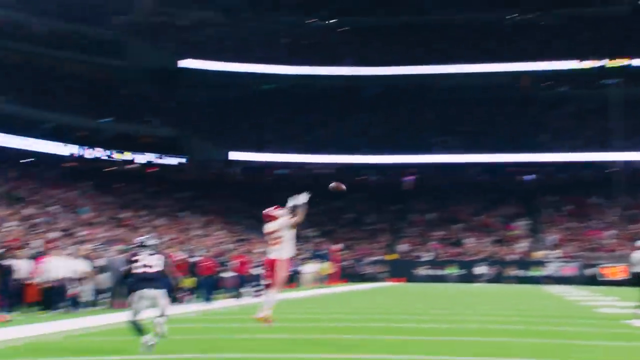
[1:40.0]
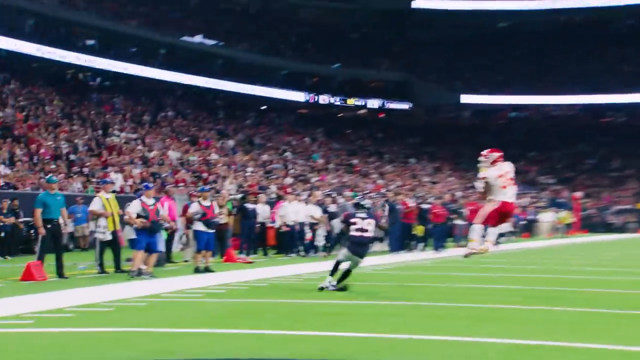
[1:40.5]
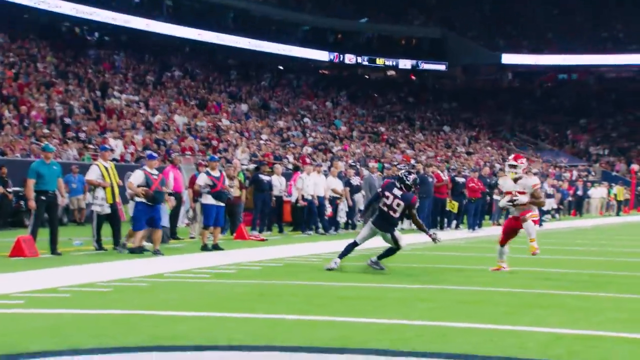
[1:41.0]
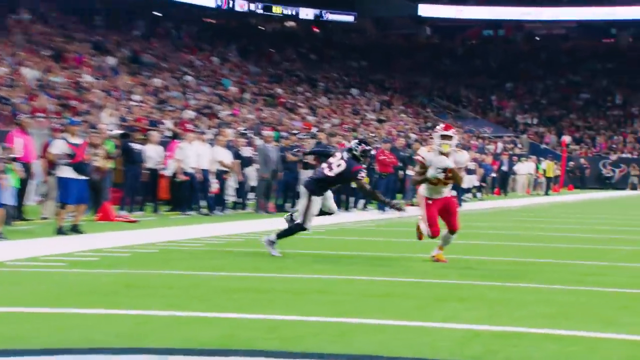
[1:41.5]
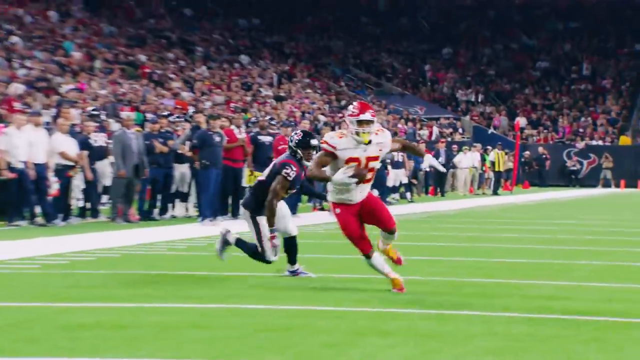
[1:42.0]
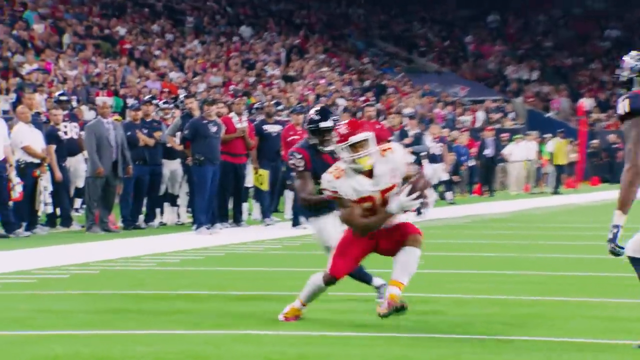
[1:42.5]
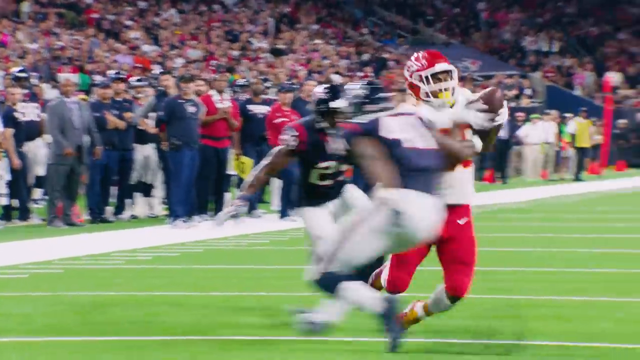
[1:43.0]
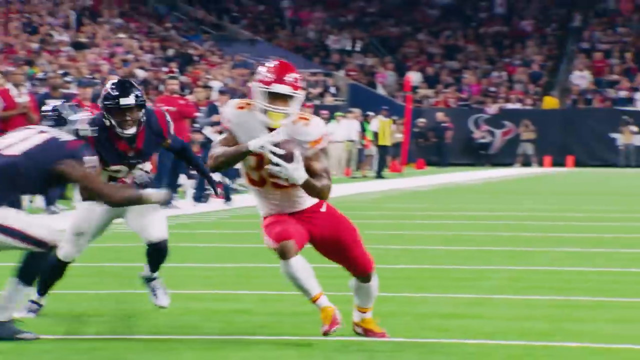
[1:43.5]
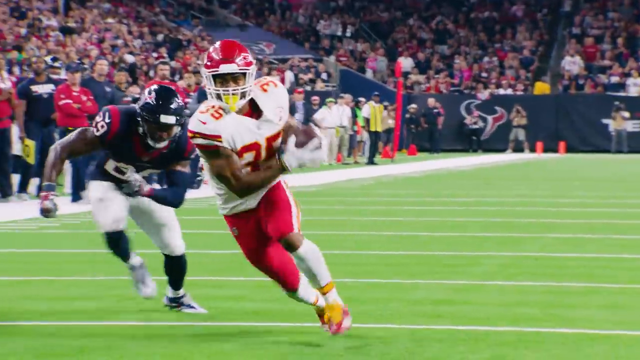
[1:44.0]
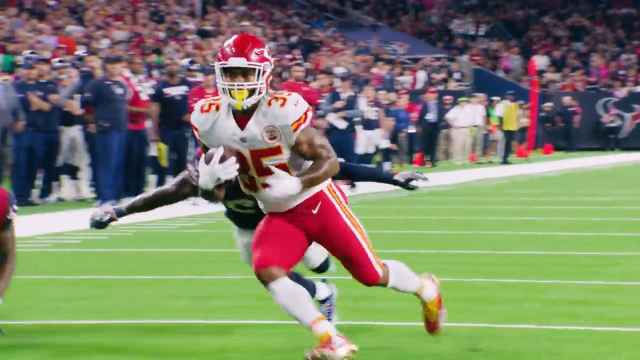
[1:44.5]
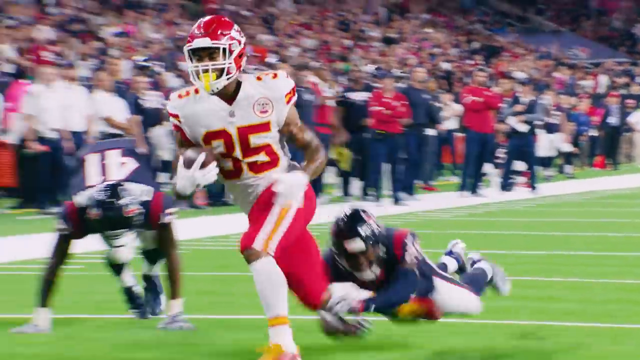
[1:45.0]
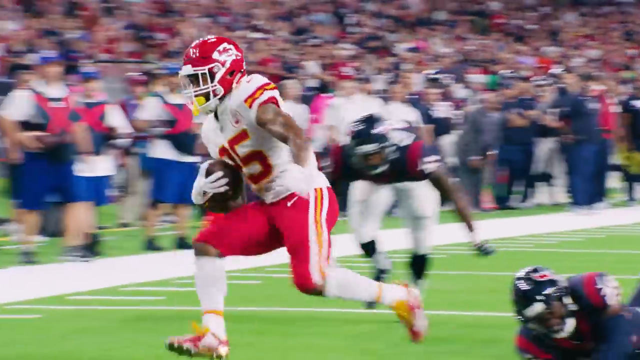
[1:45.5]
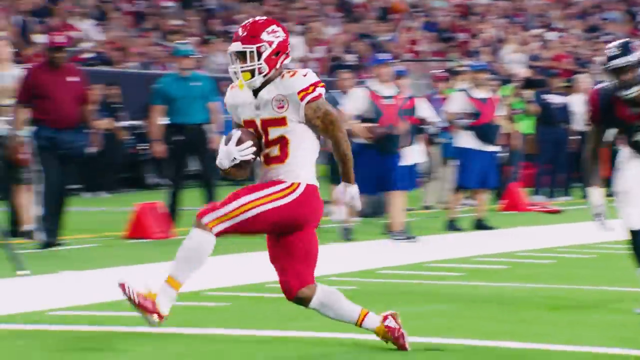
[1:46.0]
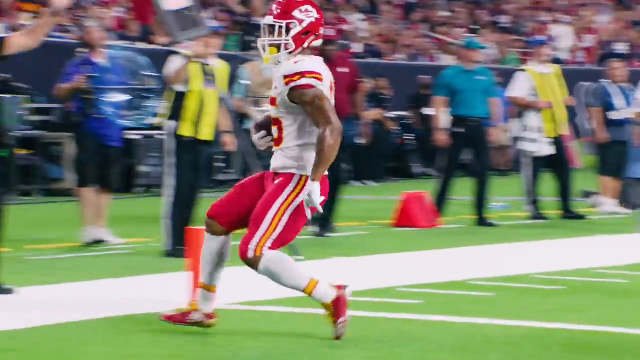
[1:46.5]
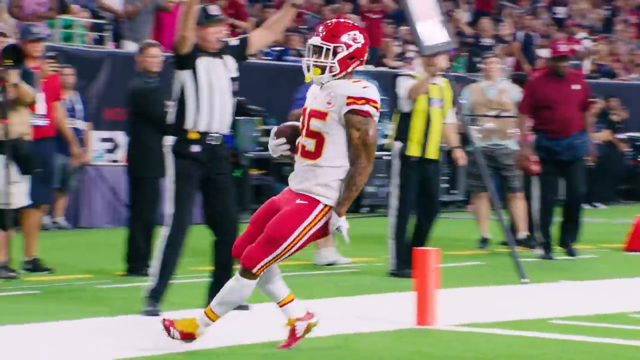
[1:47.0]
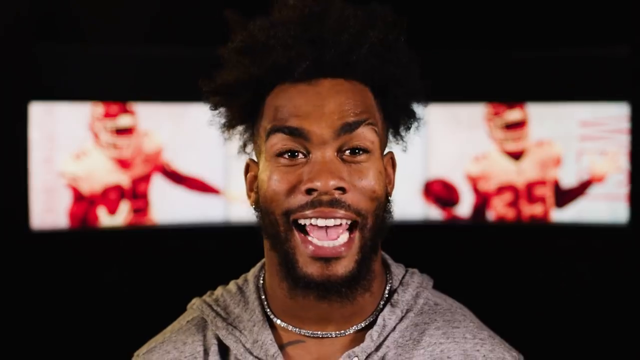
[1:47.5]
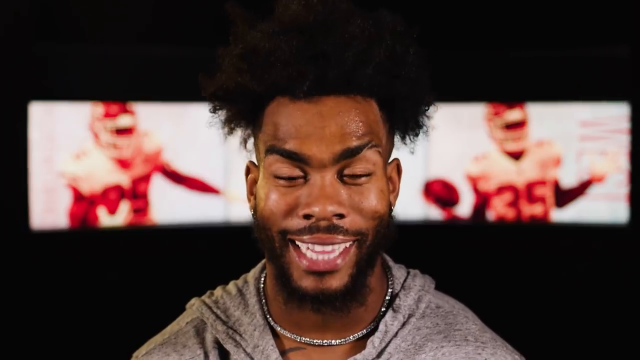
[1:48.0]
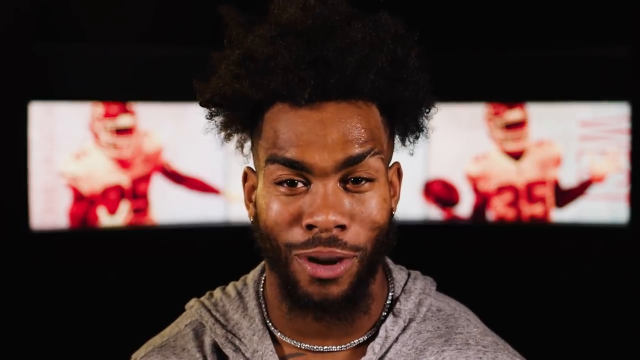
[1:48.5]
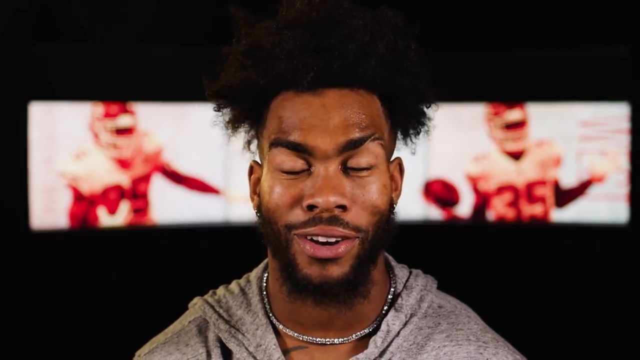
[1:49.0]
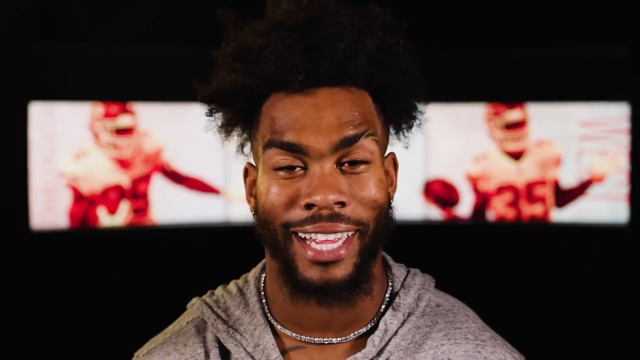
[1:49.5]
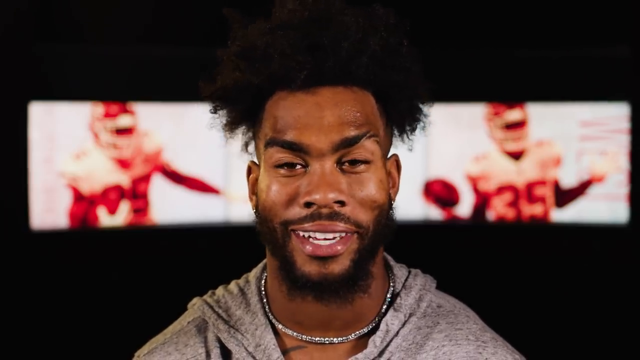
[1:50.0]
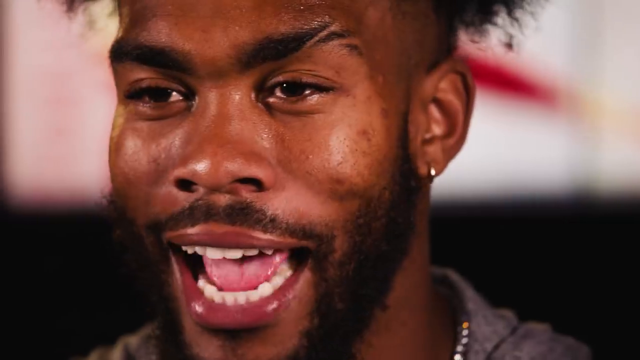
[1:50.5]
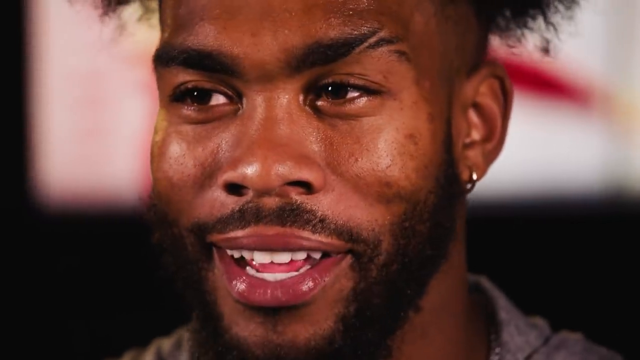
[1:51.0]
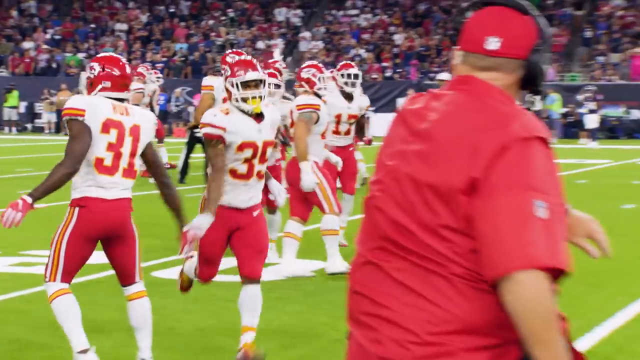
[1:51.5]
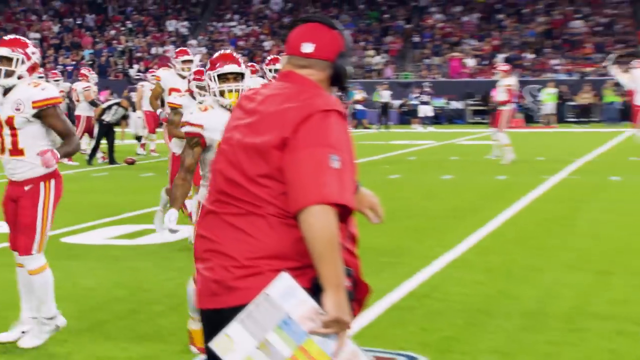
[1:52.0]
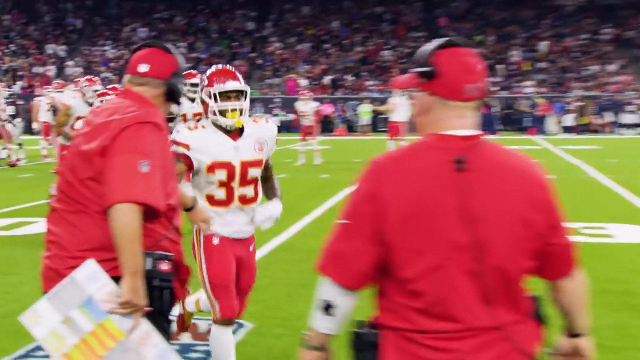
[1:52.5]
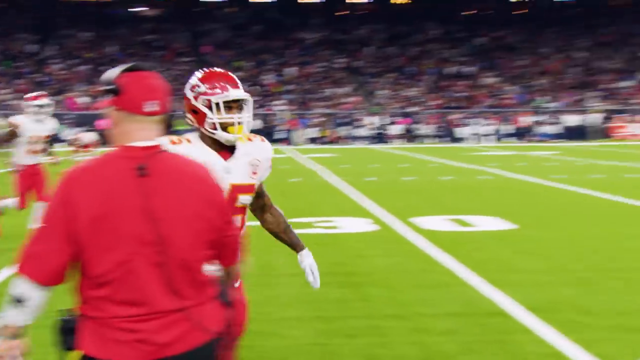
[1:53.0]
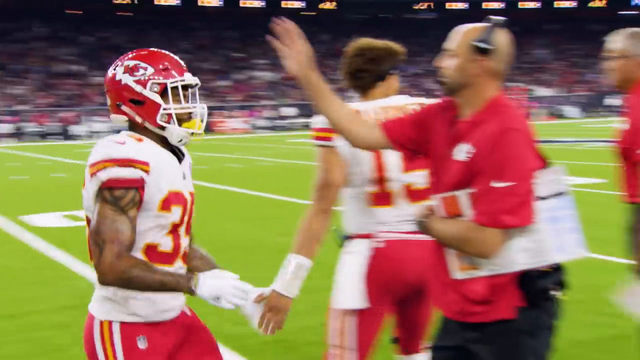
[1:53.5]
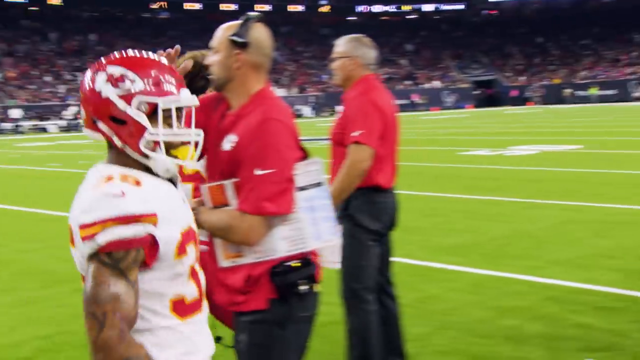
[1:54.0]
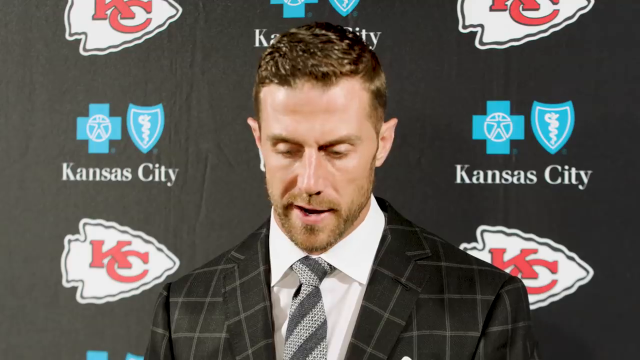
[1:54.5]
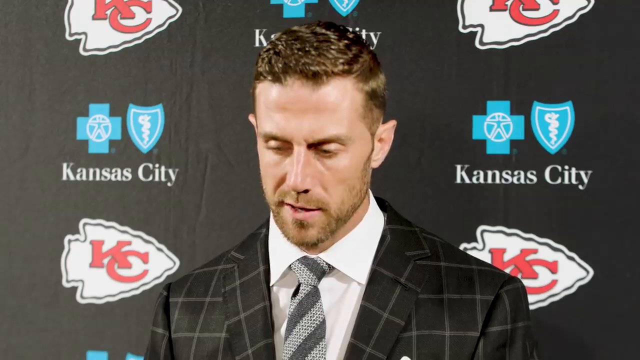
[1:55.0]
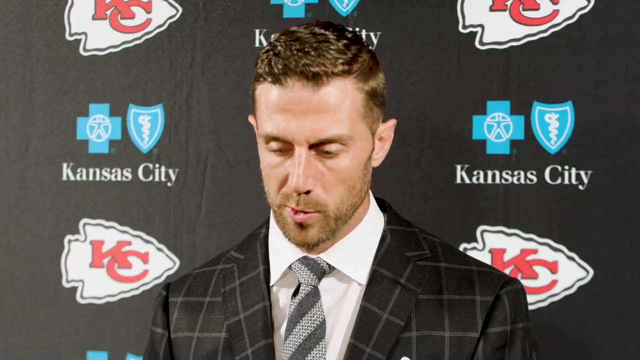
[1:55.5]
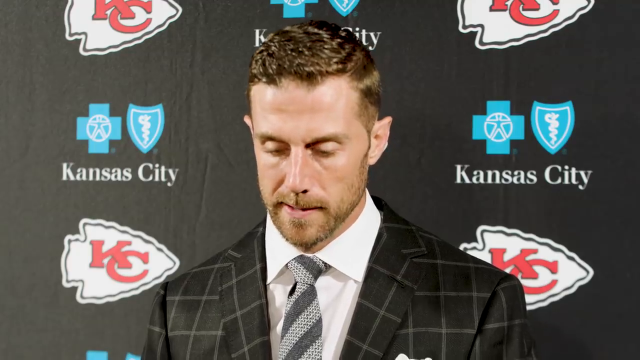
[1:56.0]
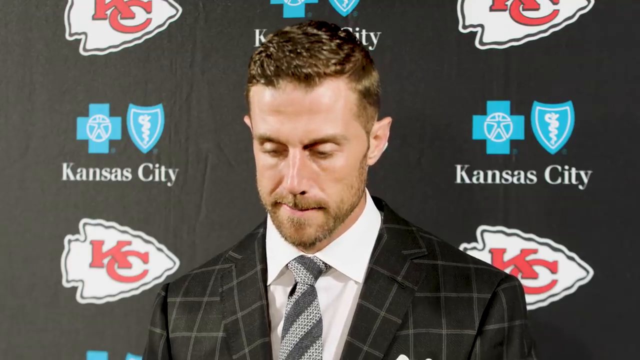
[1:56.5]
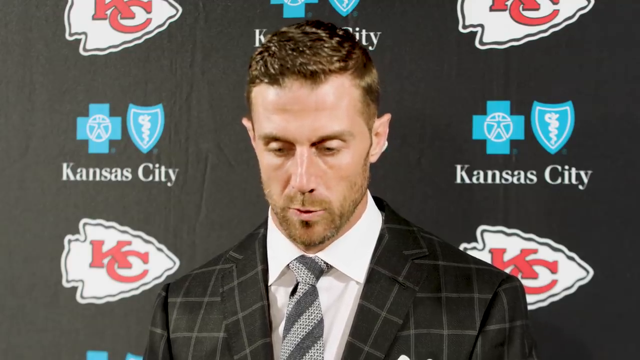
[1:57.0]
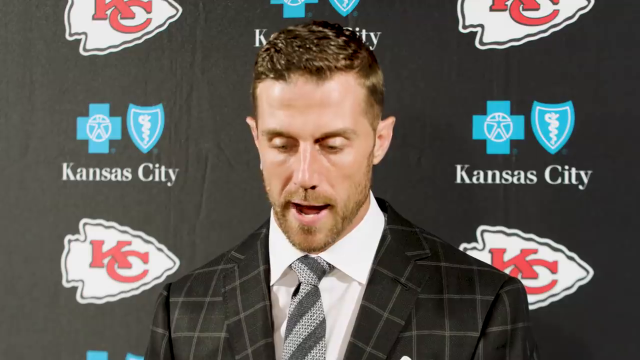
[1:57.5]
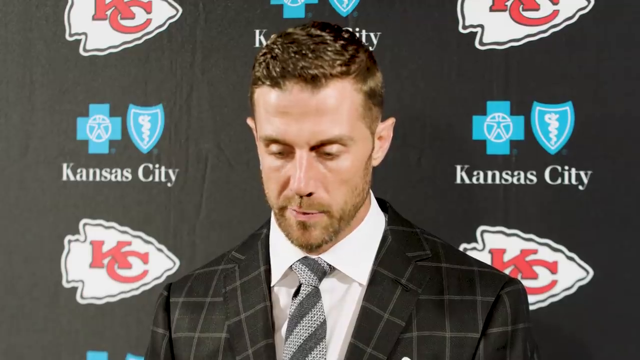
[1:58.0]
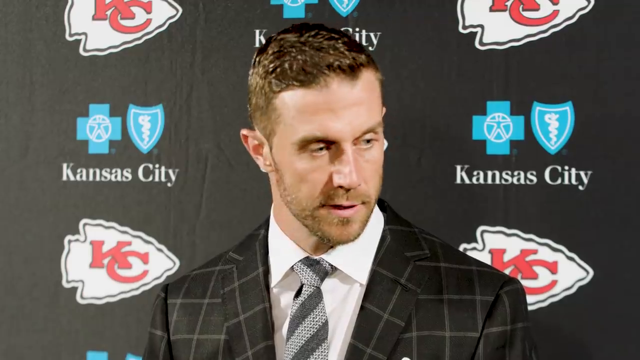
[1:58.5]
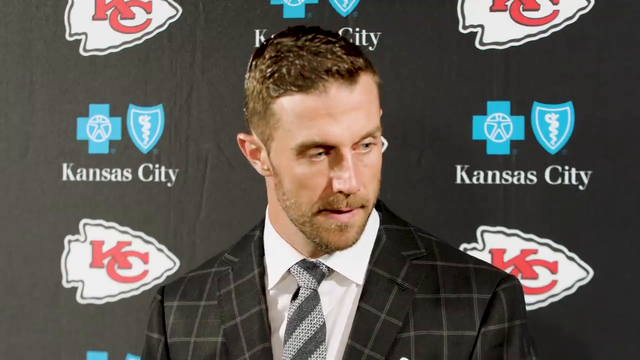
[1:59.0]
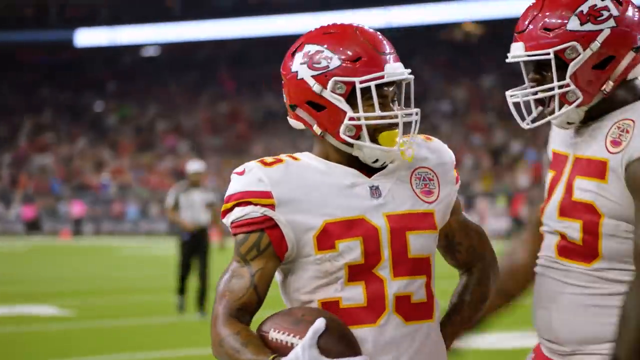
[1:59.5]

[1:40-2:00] An individual in a white shirt leaps in the centre of the screen, with part of the foreground covered by the playing surface and two-thirds of the frame showing crowd scenes behind him. He catches the football, swivels and runs for the line, dodging one blue-shirted individual, then drops his shoulder and jinks to his left at pace to go past another and gets into the touchdown zone. Celebrations follow as he runs to his teammates around the touchline. The video moves to a black background with the Kansas City Chiefs badge, a white badge with the K and the overlapping C, and some blue symbols that appear to be related to Kansas City. A white bearded man wears a black jacket with a lighter crisscross pattern, a white shirt and a gray striped tie. The video goes back to the individual wearing number 35, who jinked in for the touchdown.